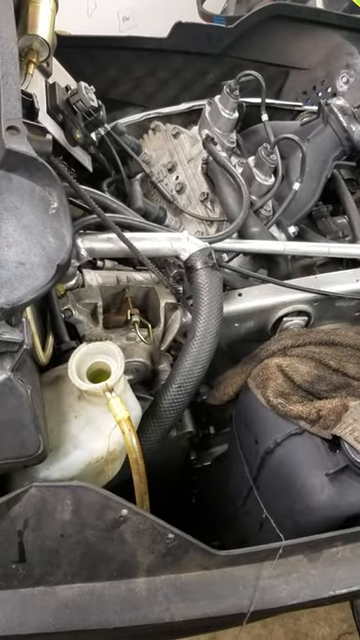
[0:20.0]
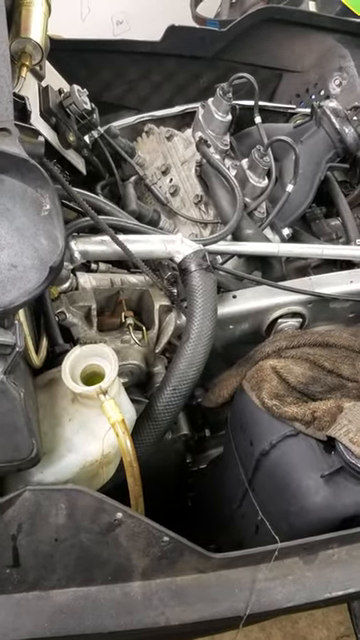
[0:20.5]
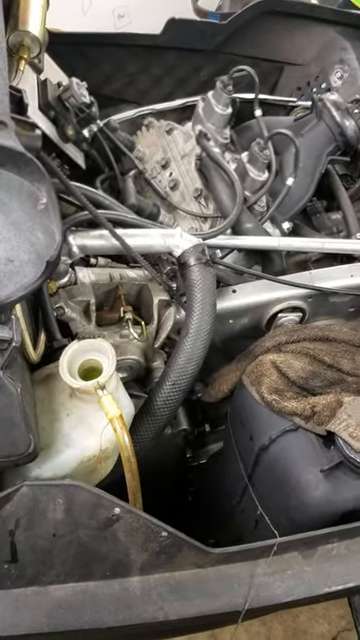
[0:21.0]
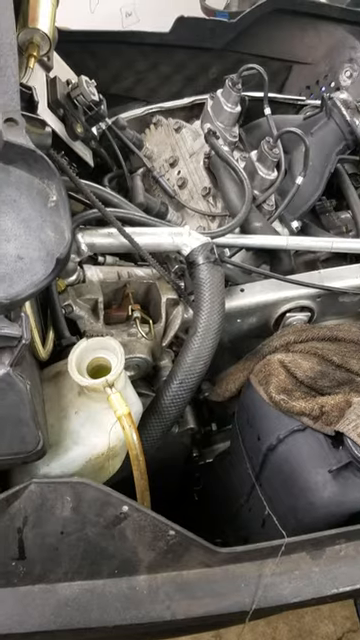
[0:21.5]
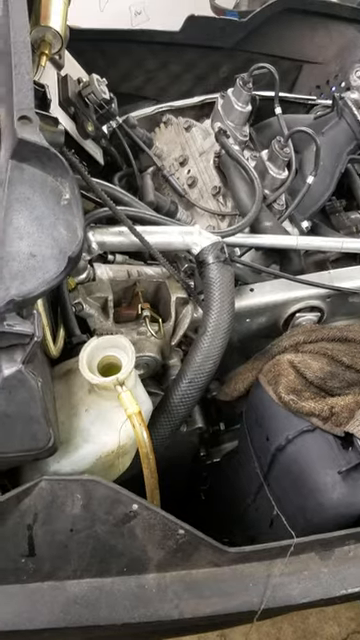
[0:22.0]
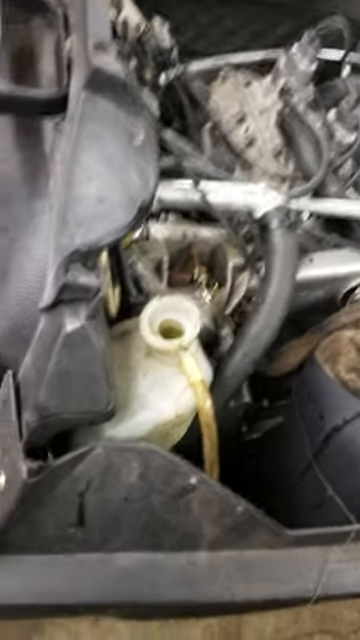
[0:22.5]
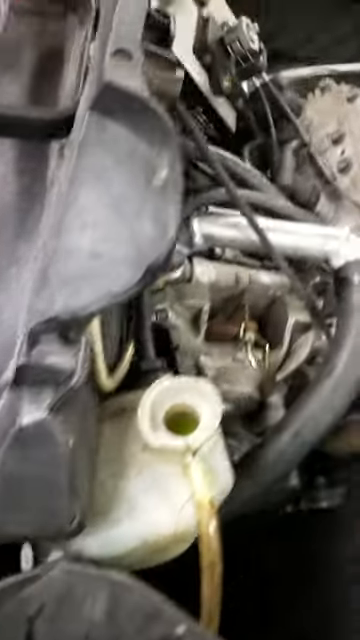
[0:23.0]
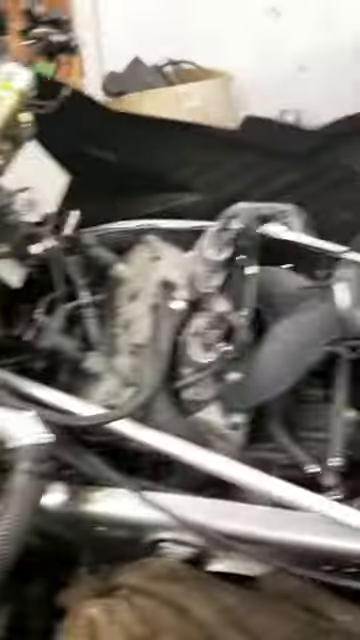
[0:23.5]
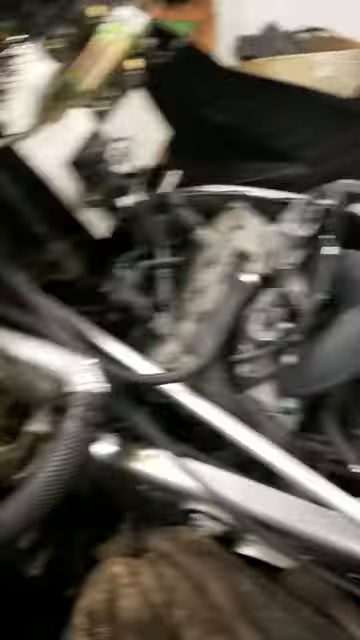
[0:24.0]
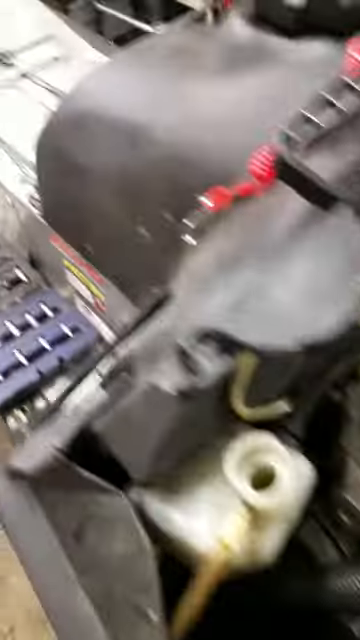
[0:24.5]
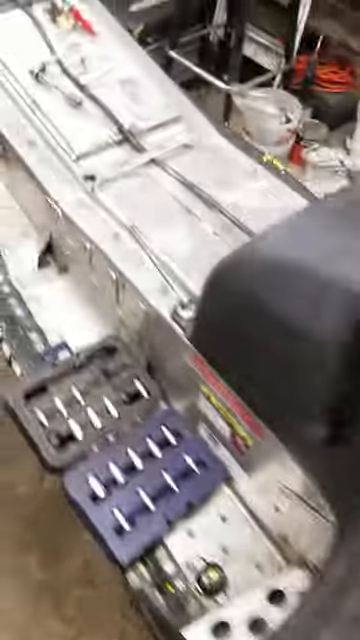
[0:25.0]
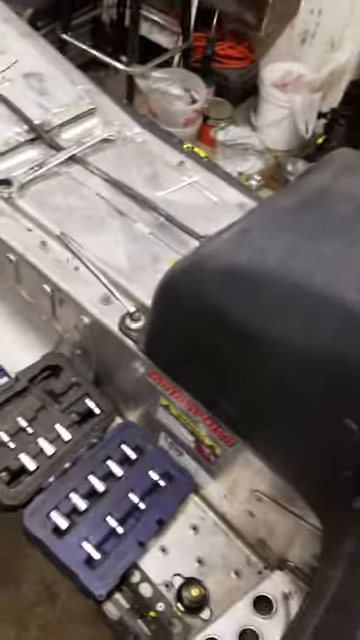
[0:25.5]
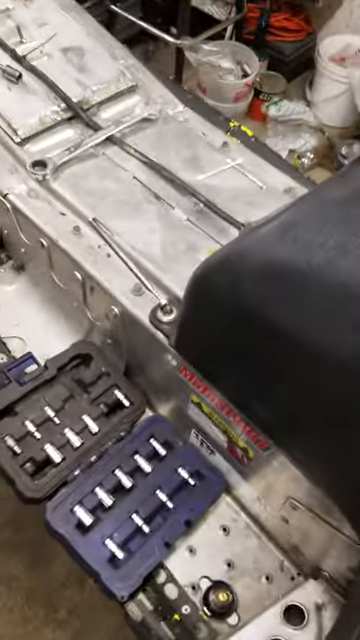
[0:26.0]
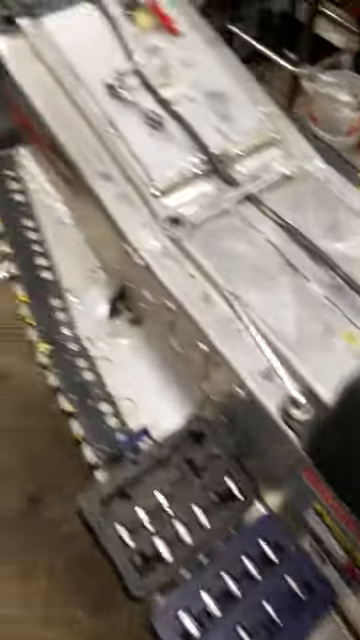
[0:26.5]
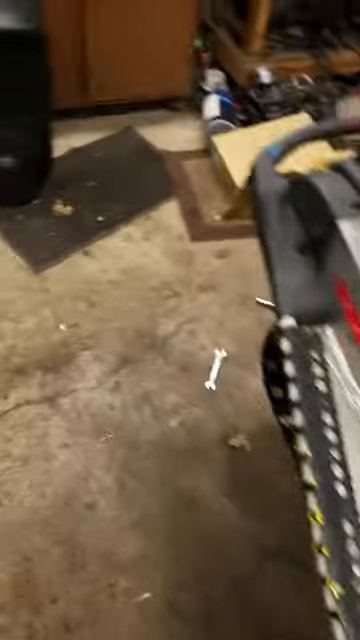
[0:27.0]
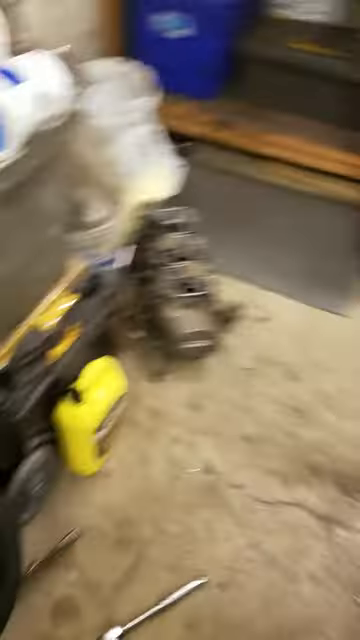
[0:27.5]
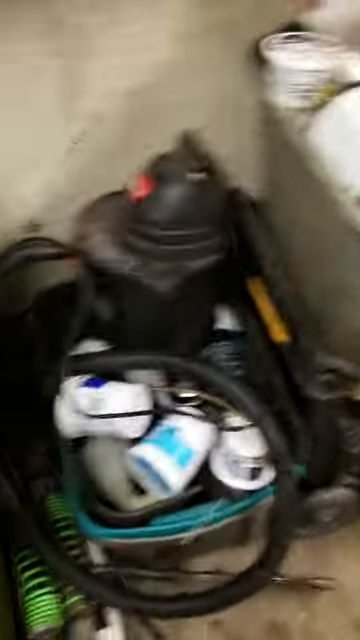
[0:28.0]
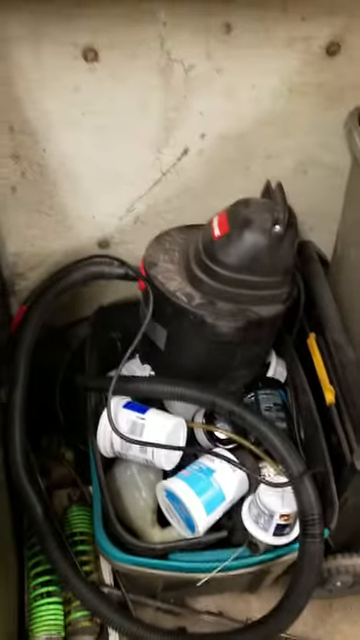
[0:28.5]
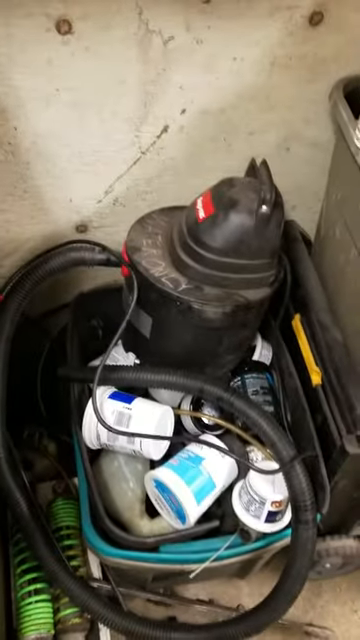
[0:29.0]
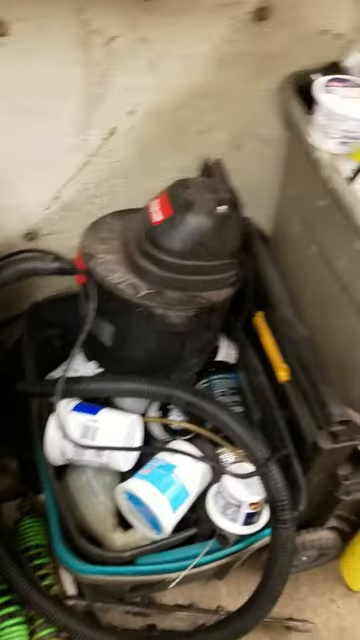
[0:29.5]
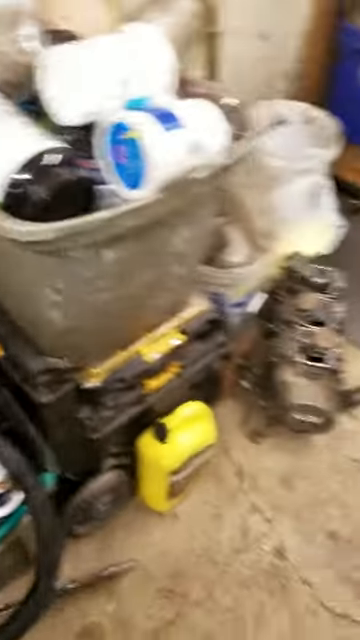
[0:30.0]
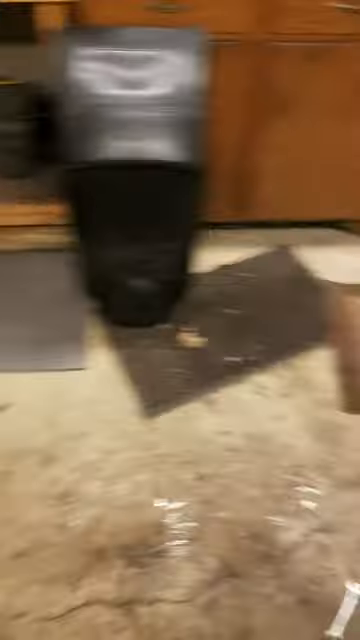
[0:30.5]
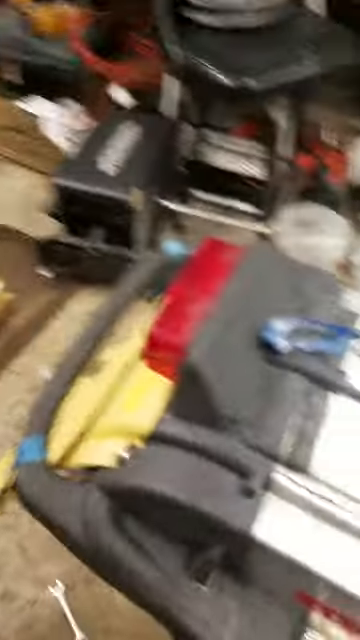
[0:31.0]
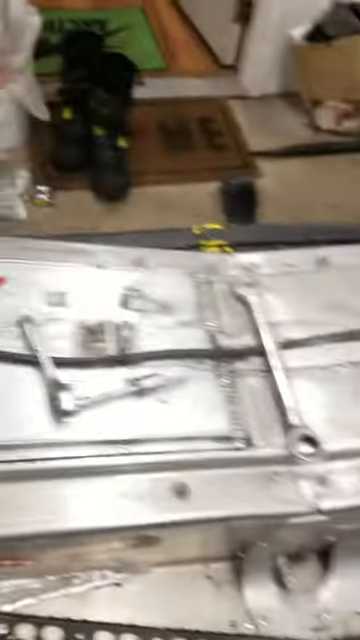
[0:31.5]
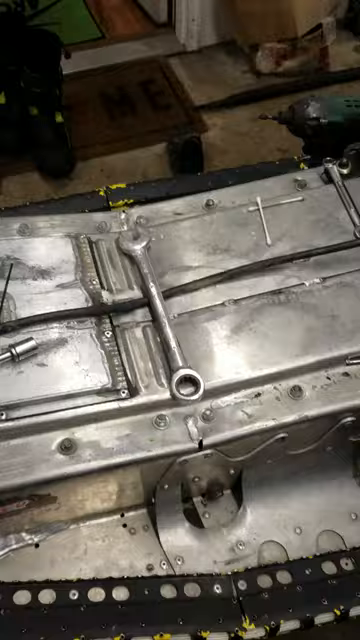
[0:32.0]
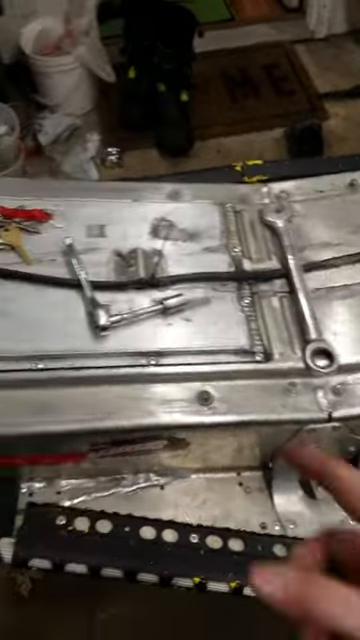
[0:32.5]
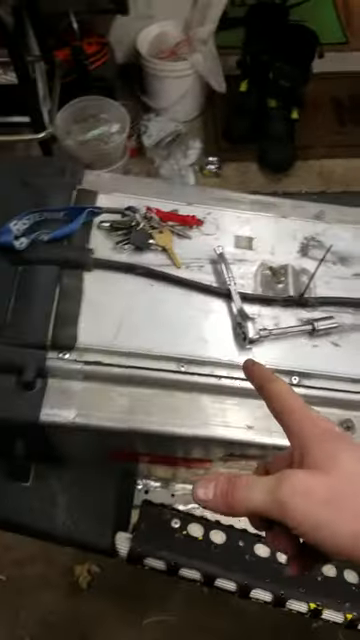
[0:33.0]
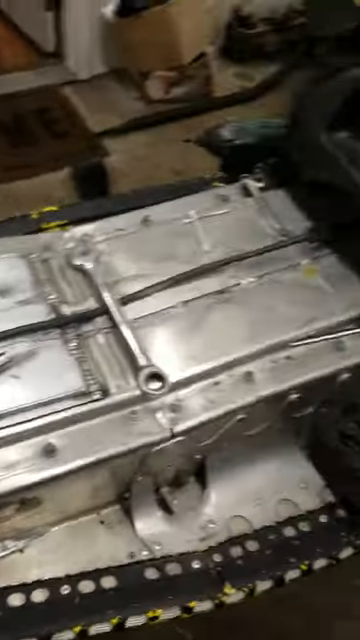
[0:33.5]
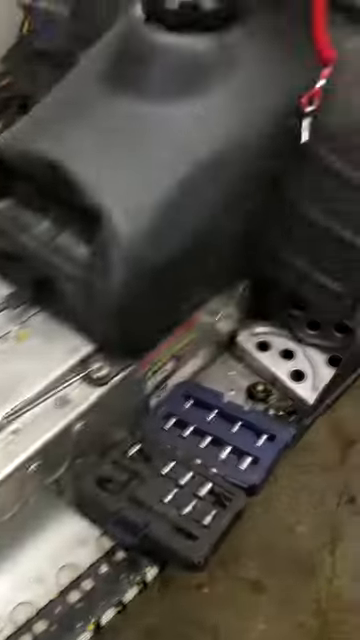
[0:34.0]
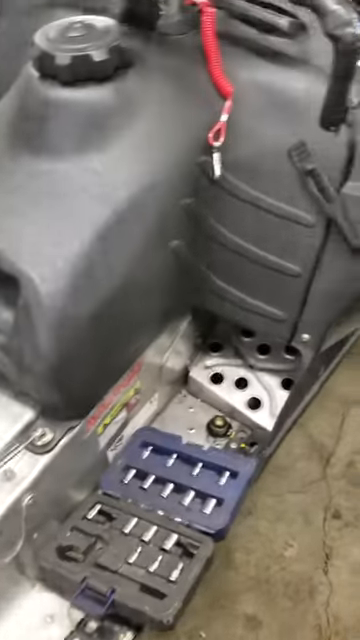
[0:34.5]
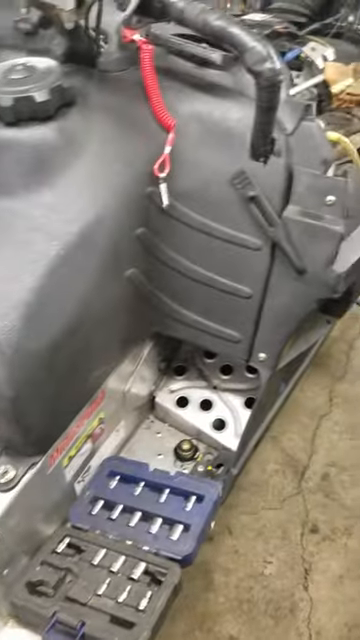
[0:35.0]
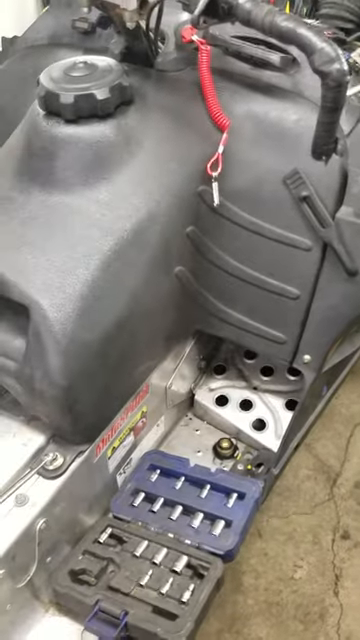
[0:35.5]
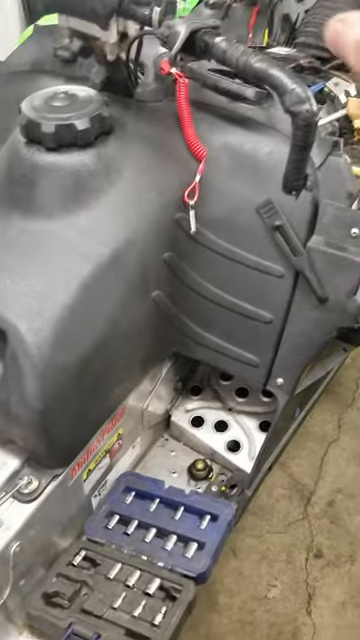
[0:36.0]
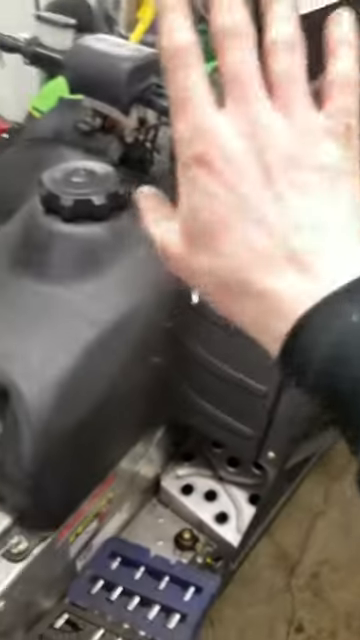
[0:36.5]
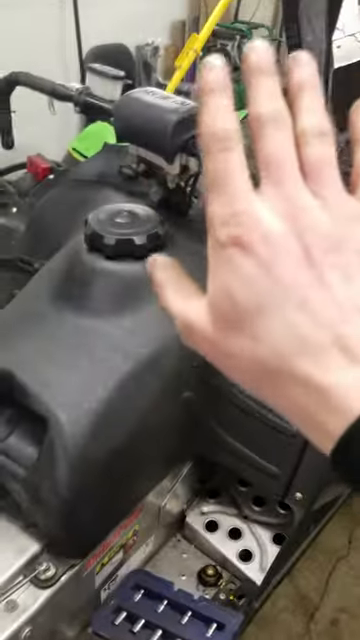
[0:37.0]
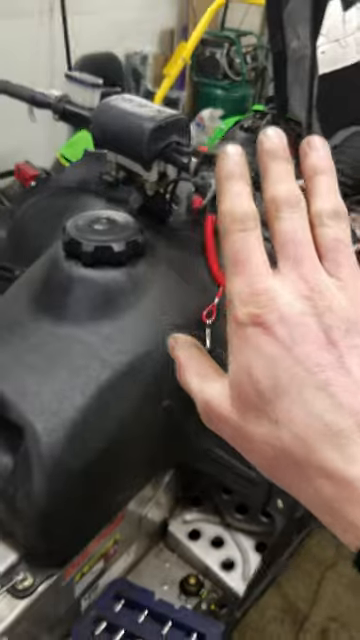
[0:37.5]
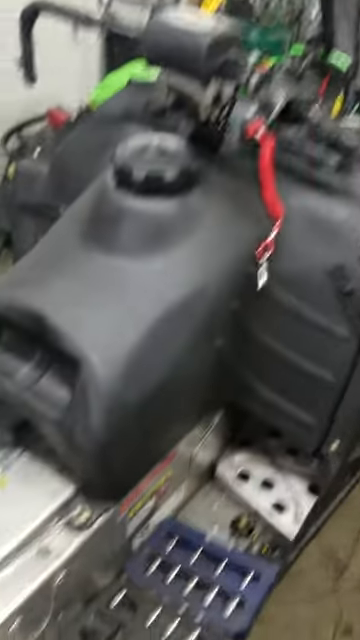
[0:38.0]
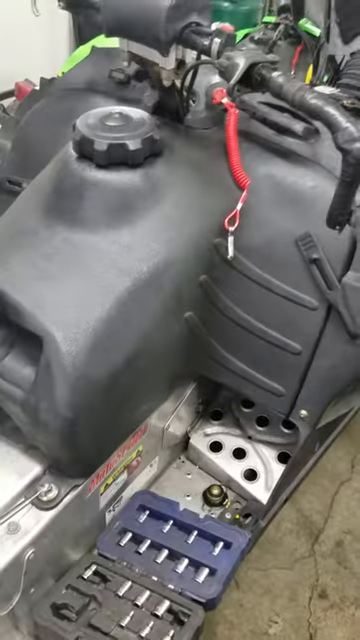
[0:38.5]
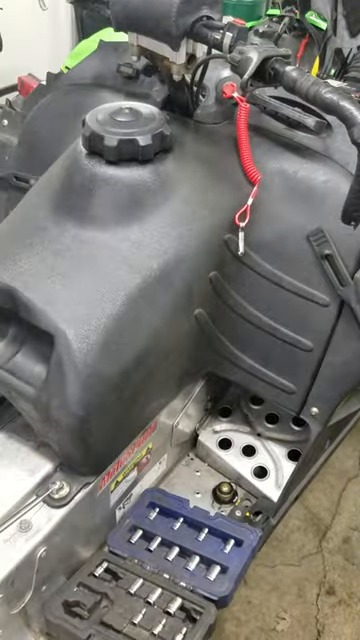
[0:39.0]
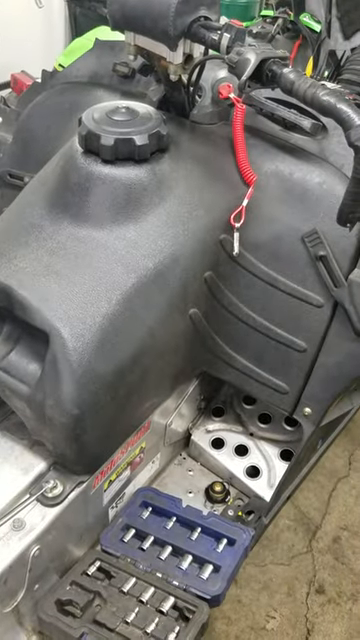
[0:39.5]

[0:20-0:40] Some sort of engine that someone might be working on is visible, with hoses and areas of electrical wires. The person moves very fast around the garage or shed they are in. Their hand points to a portion of the engine, bumping slightly up and down. There is a place for liquid with a clear tube coming out of it, and a spot at the top that resembles where gasoline might be poured in. It does not look like a full car; it could be a portion of one, or possibly some type of lawnmower. The camera moves very fast, kind of back and forth, and shows some tools, then a black shop vac in the back room, a wrench and more tools. The hand then points to a gray object at the top.